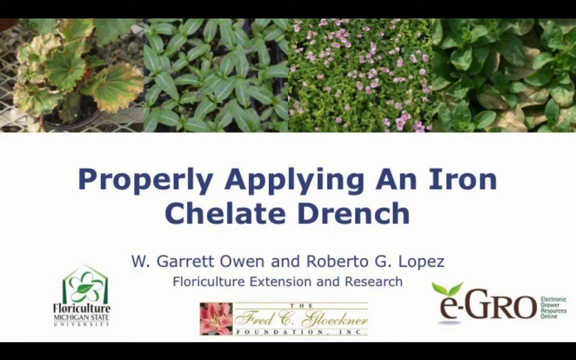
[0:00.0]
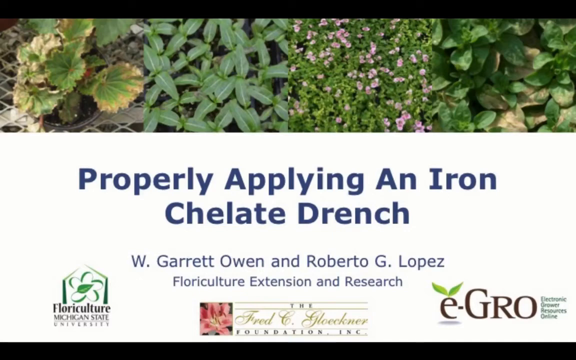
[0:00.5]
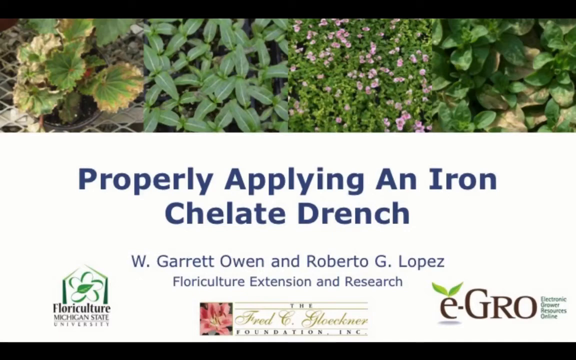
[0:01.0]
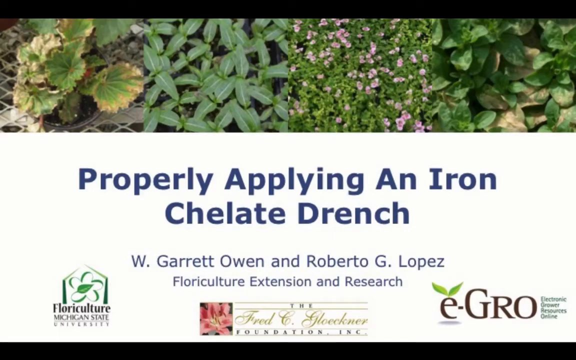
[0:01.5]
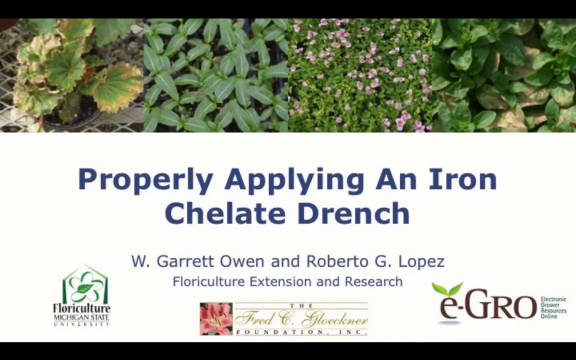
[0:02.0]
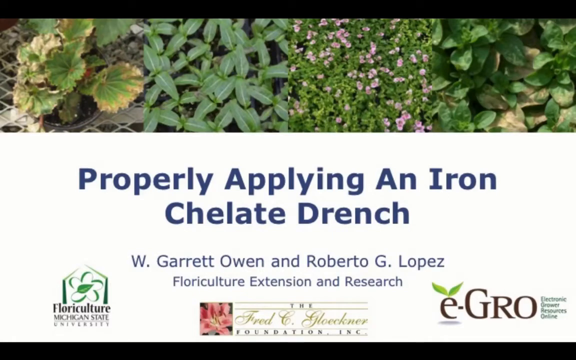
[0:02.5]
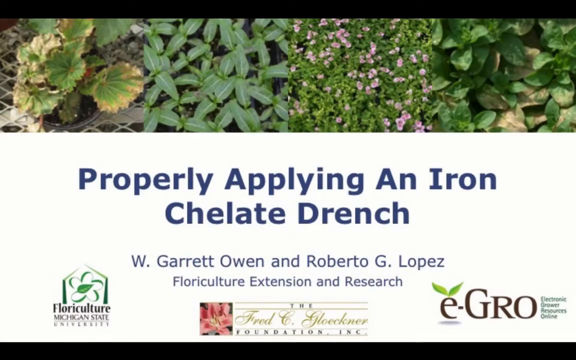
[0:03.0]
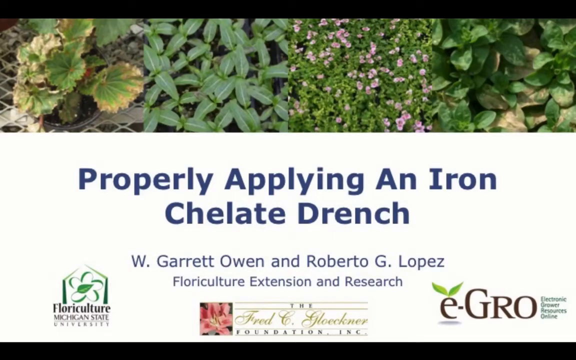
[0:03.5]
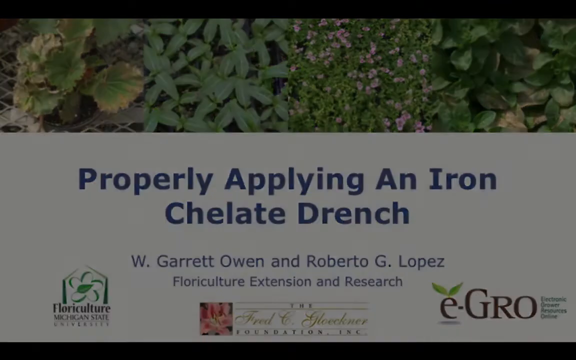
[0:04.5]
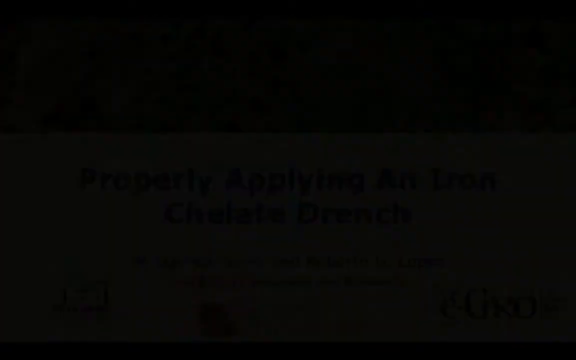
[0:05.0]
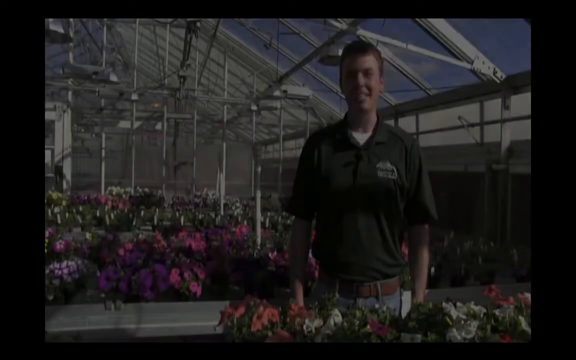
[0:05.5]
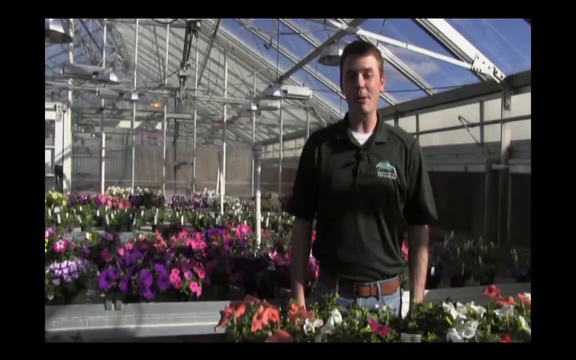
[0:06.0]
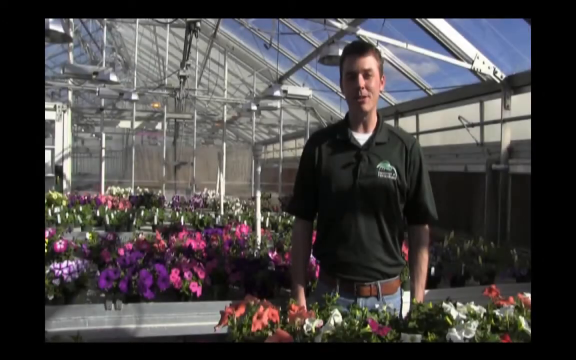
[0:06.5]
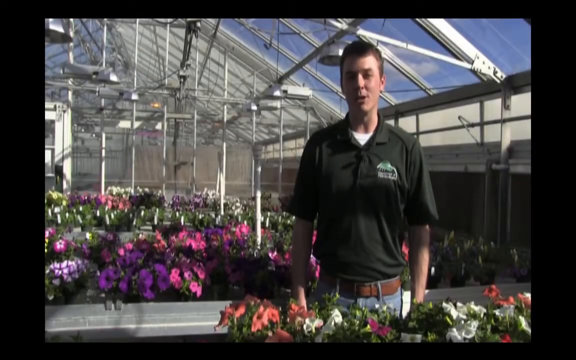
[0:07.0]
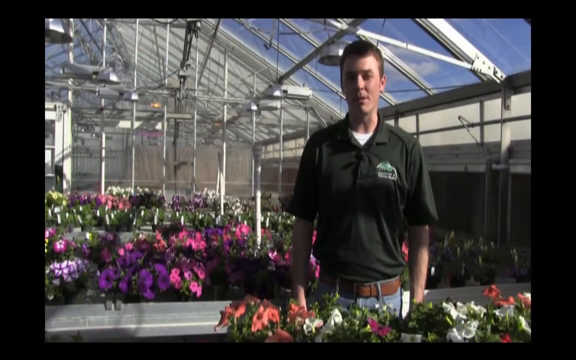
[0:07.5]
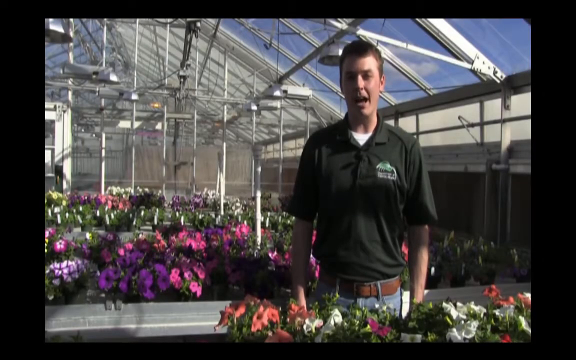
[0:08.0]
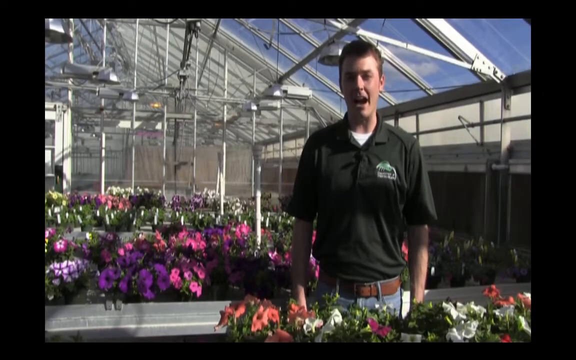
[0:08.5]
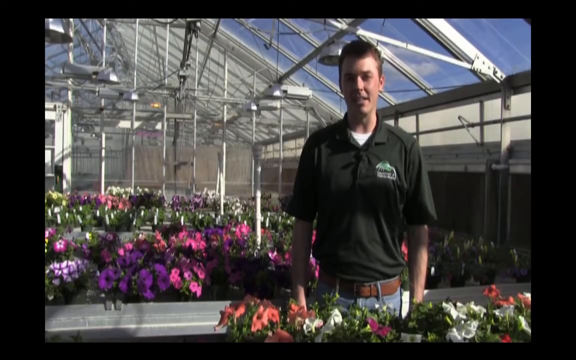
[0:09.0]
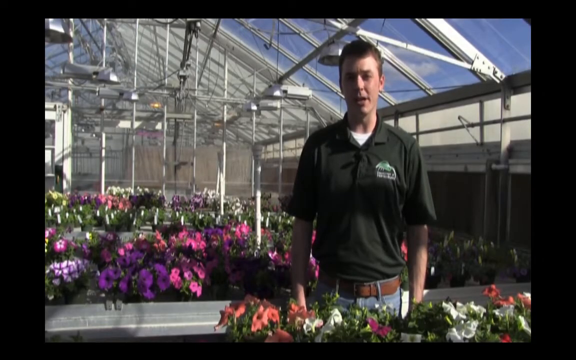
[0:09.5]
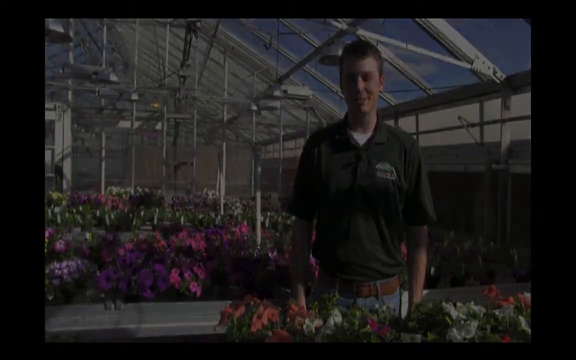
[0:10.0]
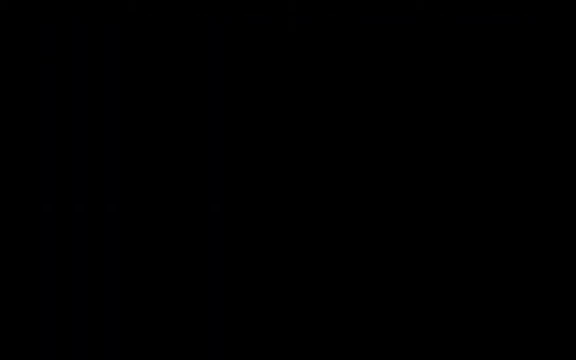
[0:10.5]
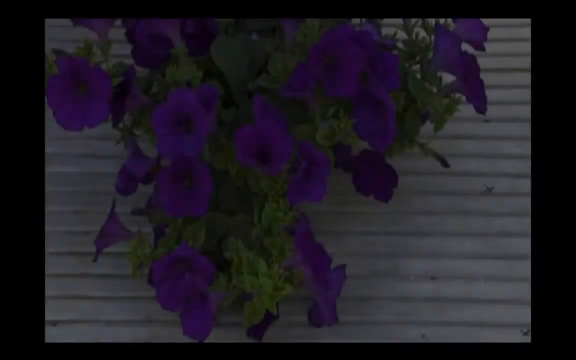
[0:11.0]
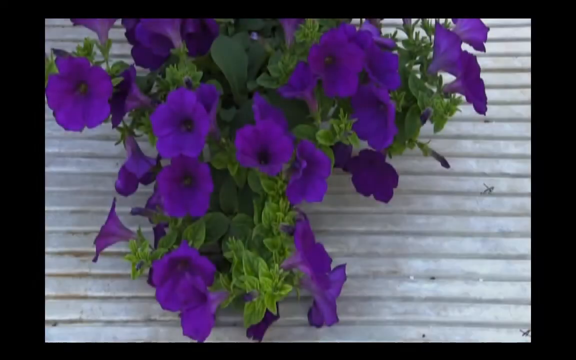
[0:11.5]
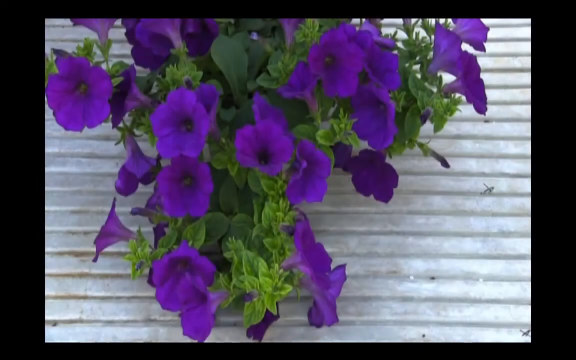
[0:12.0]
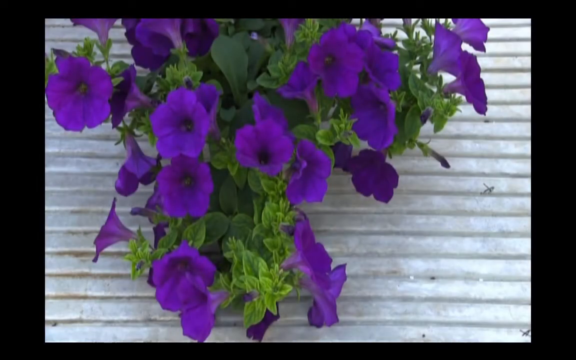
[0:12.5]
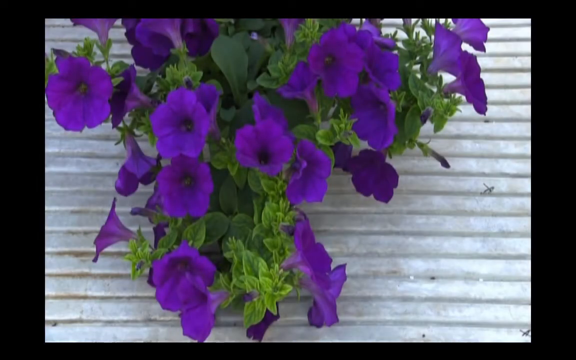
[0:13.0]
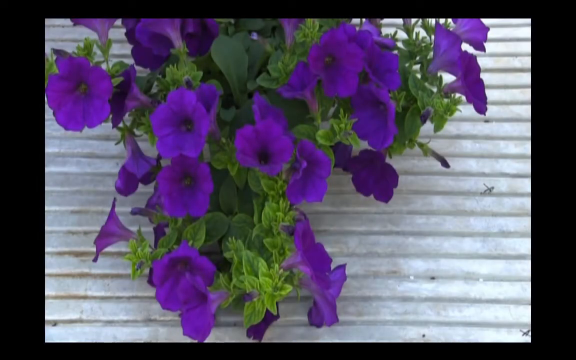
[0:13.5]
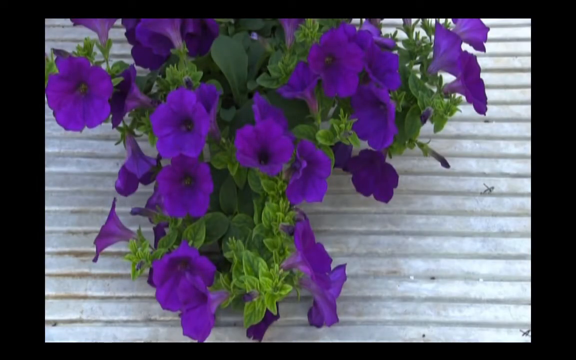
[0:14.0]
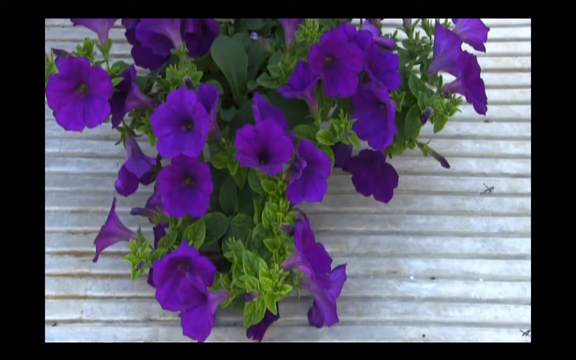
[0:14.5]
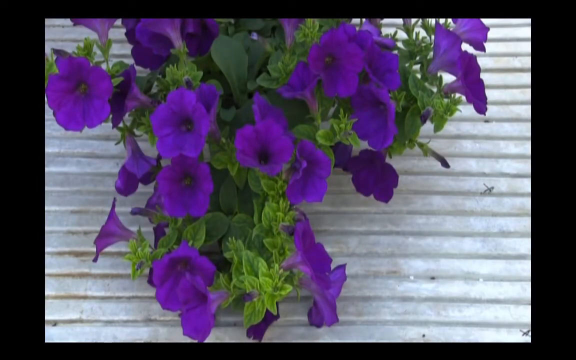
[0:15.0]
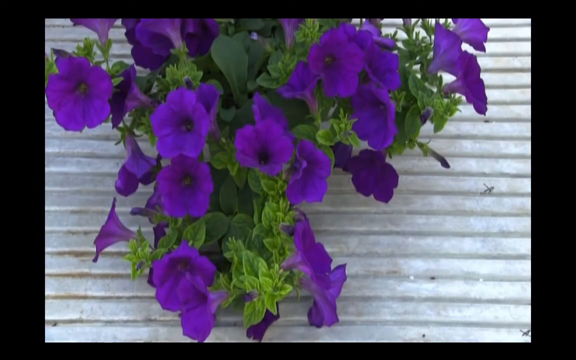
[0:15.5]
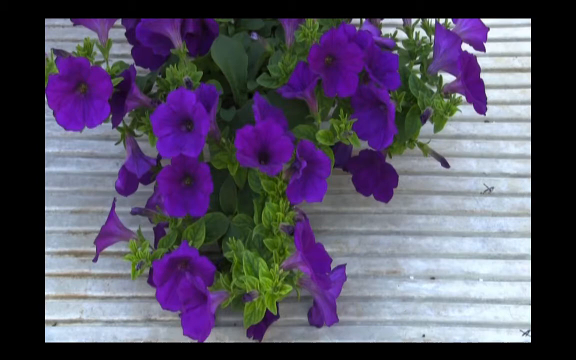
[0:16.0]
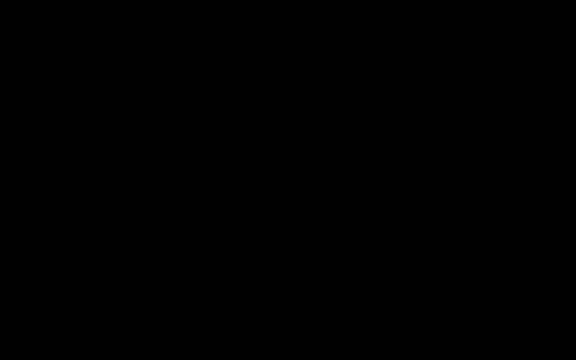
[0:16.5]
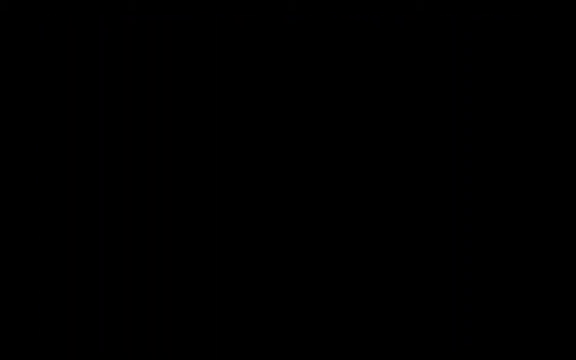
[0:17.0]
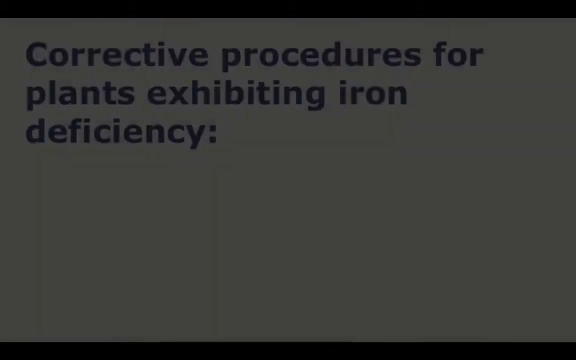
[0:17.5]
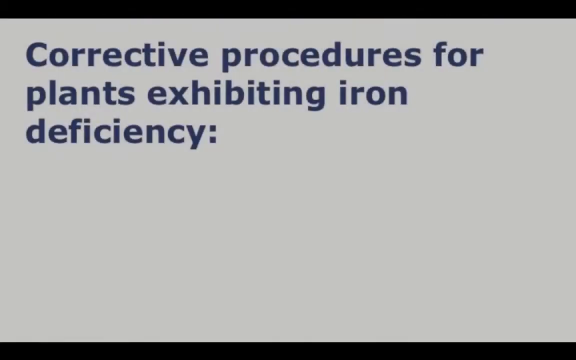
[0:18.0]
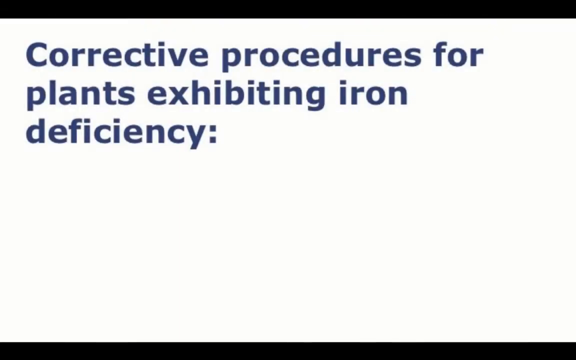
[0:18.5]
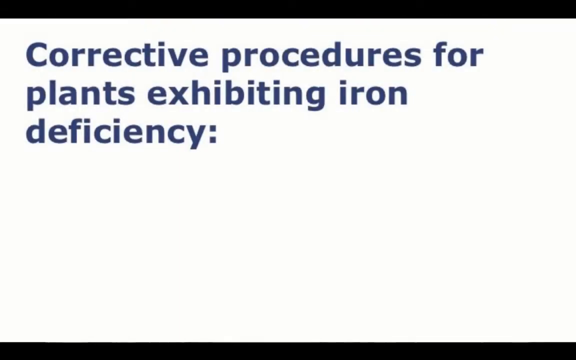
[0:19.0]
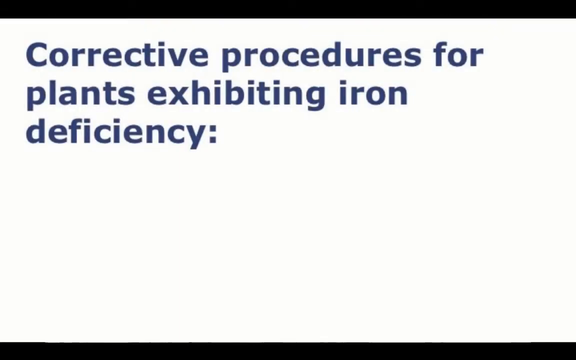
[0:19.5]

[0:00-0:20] A row of pictures of different plants appears, arranged from left to right: the center plant looks like it is bending, the second from the left shows just green plants, the third from the left is a green plant with a mixture of pink plants, and the fourth from the left is a green plant among rocks. Next, a white adult male wearing a black top, blue jeans and a brown belt is shown in a flower garden greenhouse. Then a flower appears, set on top of something that looks like corrugated iron; it has alternating purple and green leaves. Text in blue reads "the corrective procedures for plants exhibiting ion deficiency."